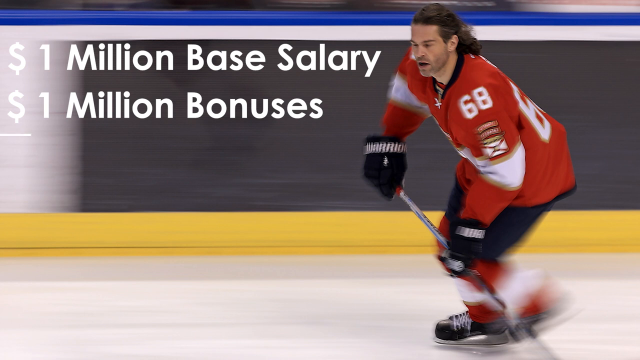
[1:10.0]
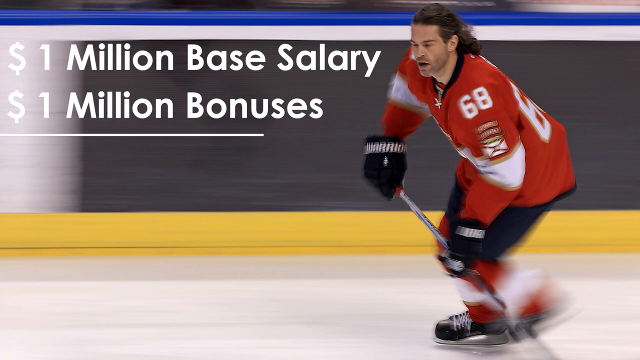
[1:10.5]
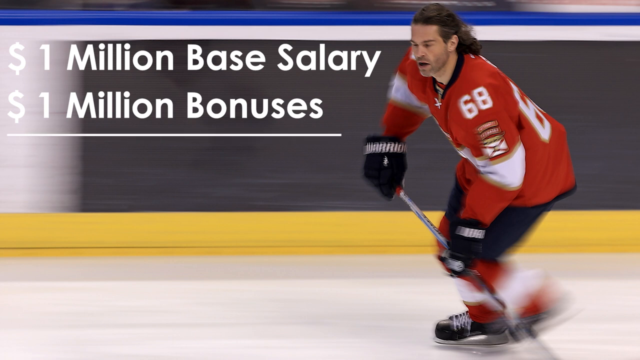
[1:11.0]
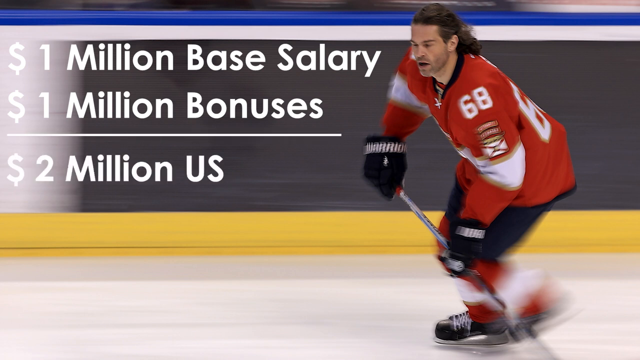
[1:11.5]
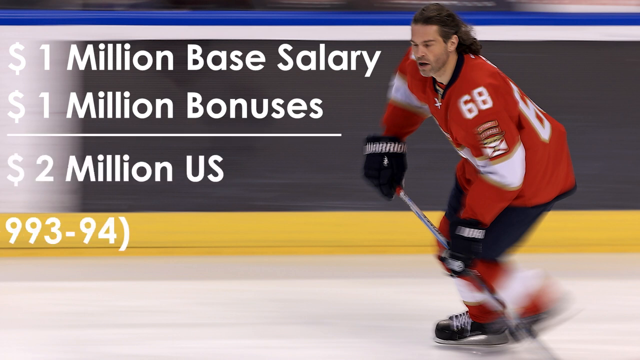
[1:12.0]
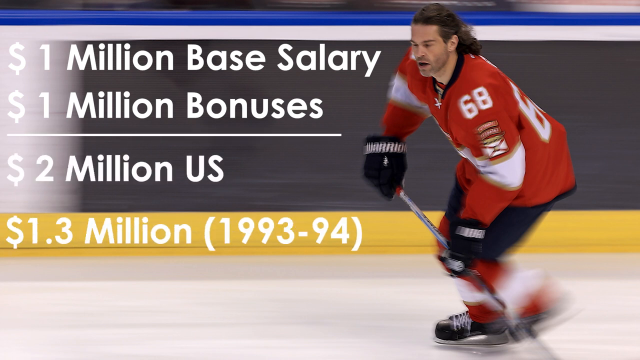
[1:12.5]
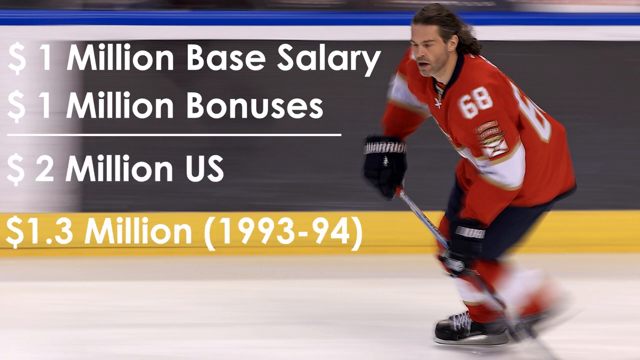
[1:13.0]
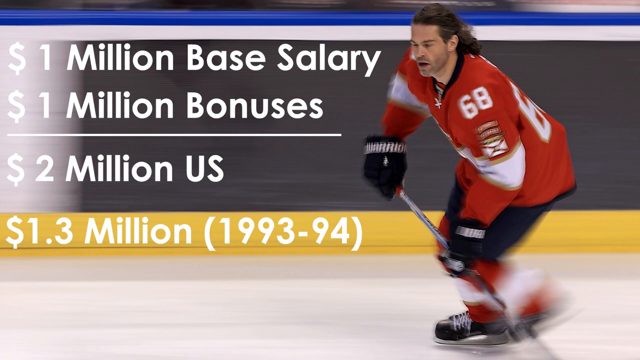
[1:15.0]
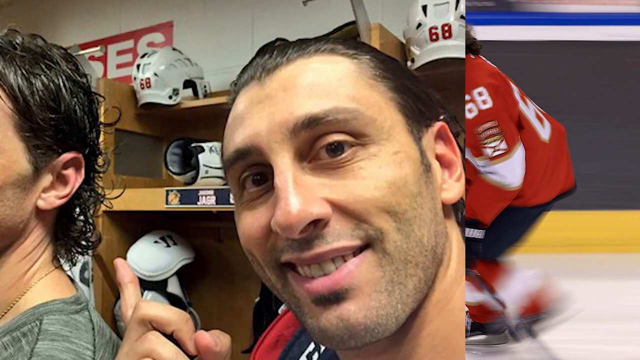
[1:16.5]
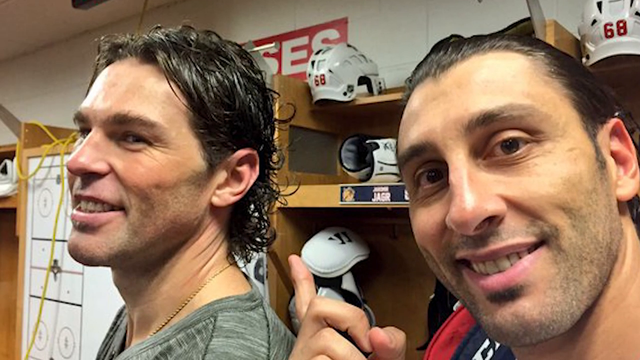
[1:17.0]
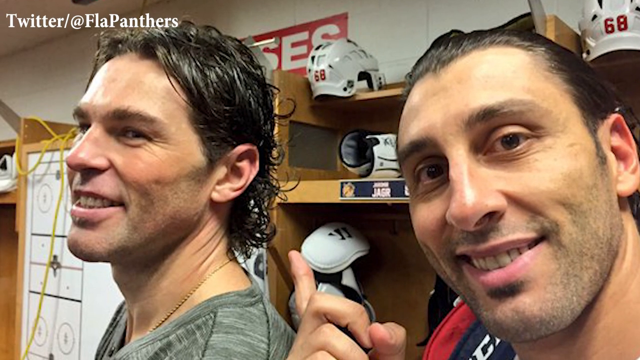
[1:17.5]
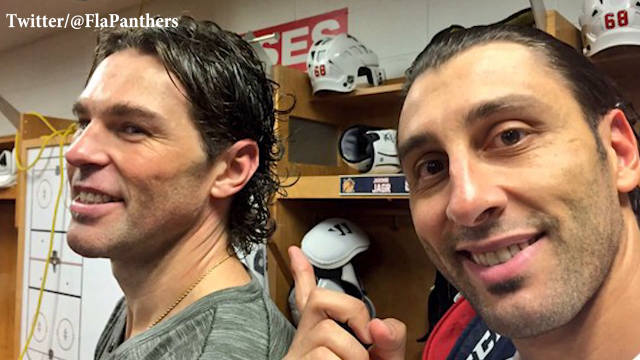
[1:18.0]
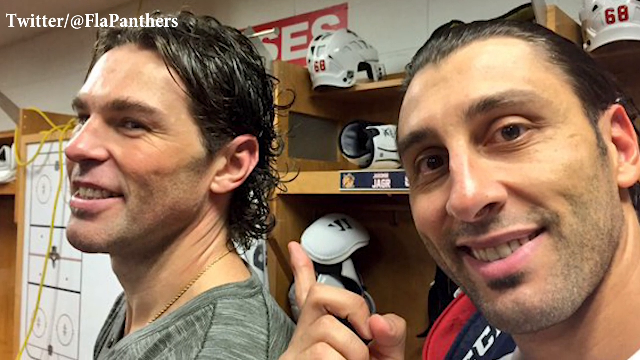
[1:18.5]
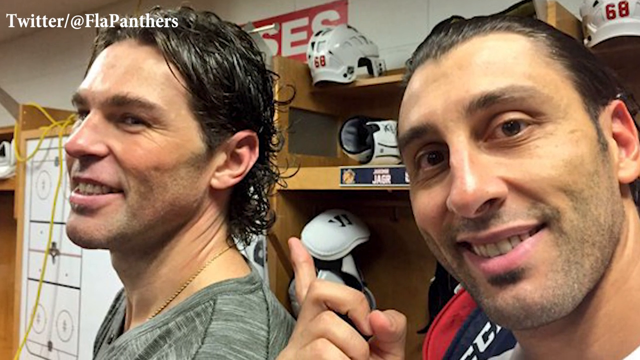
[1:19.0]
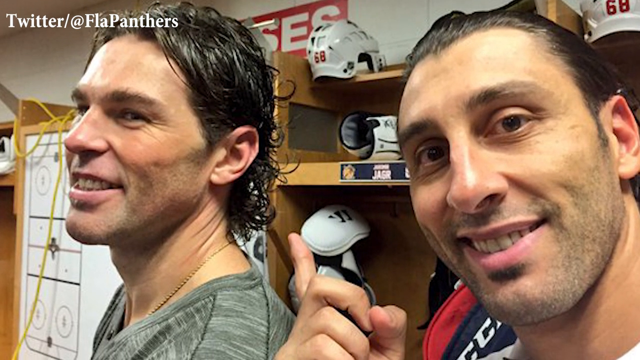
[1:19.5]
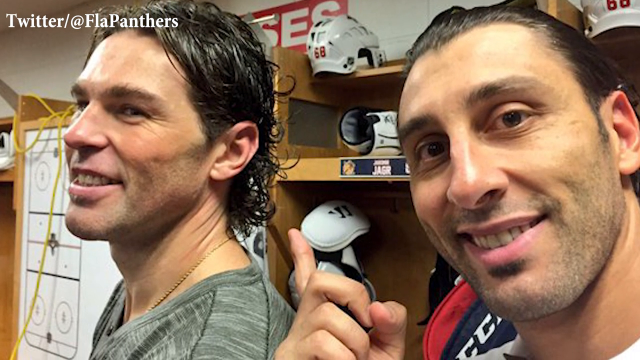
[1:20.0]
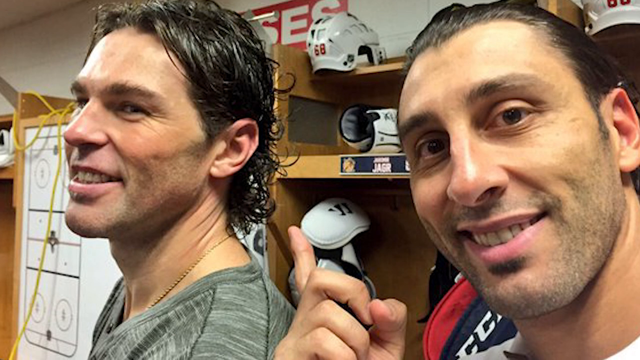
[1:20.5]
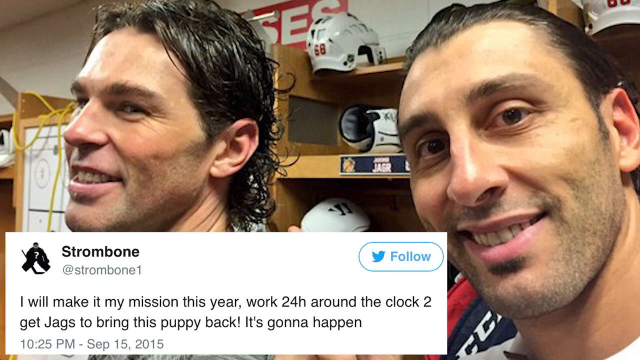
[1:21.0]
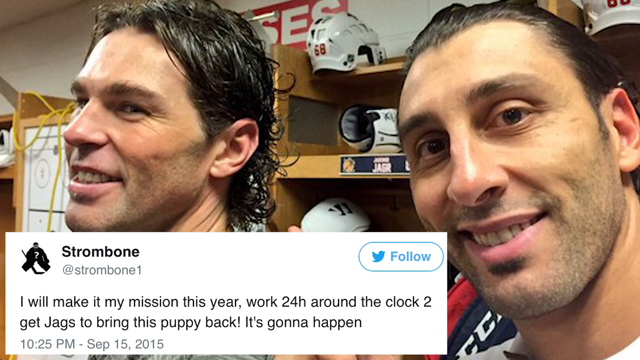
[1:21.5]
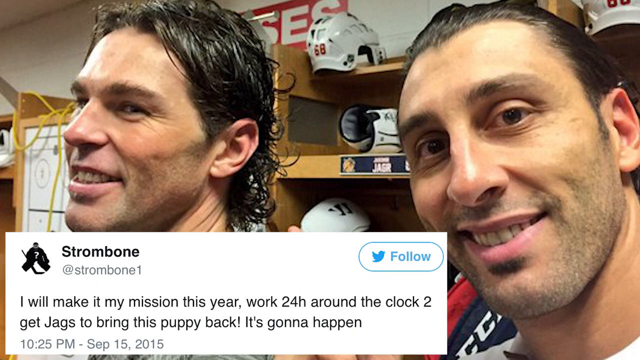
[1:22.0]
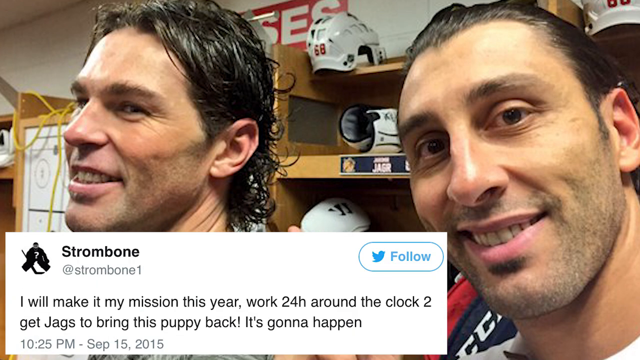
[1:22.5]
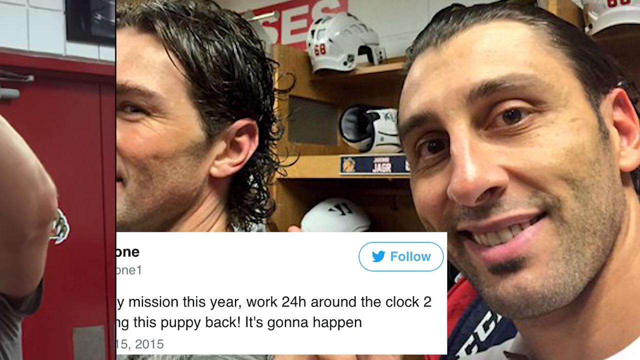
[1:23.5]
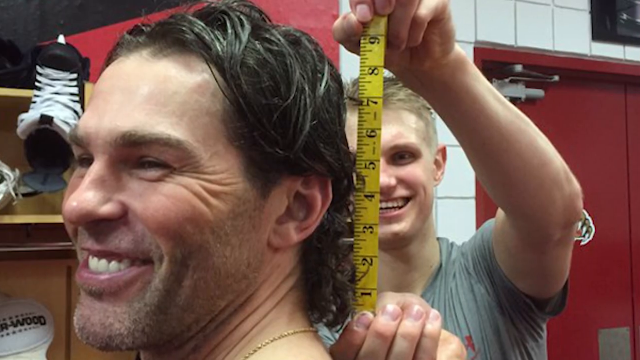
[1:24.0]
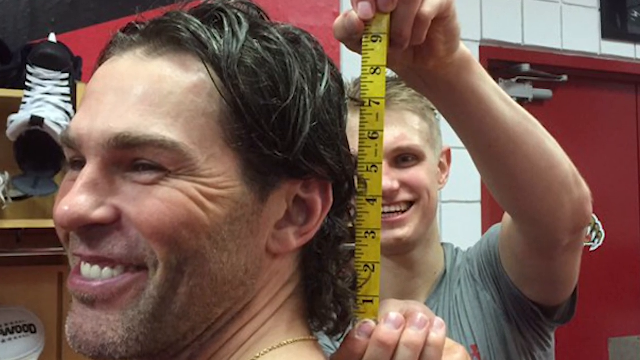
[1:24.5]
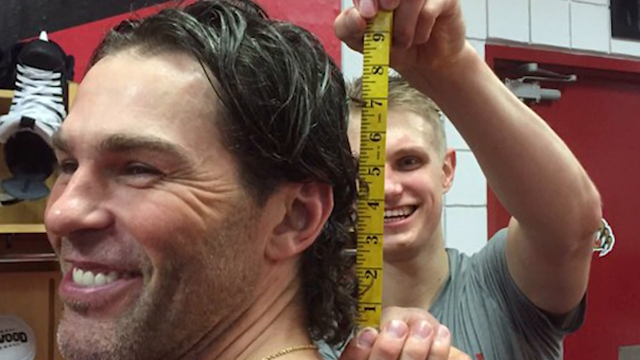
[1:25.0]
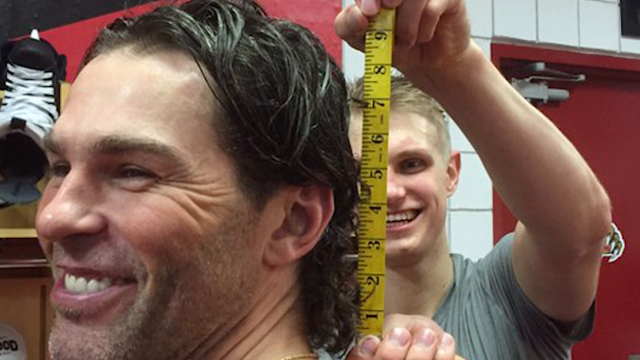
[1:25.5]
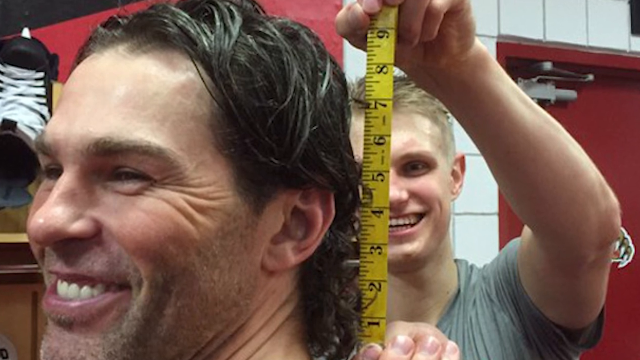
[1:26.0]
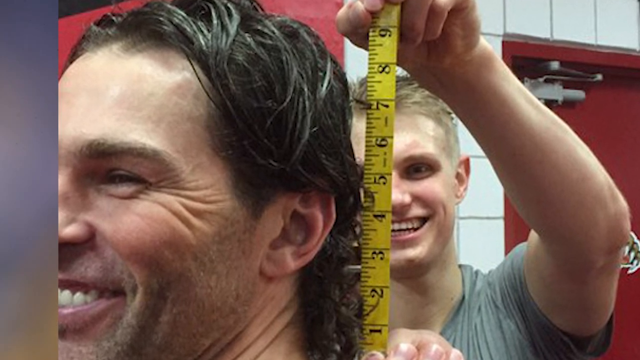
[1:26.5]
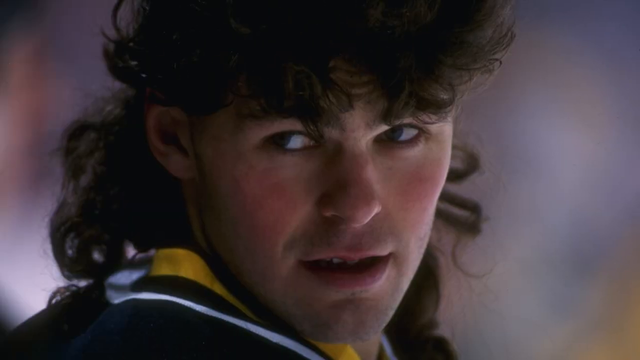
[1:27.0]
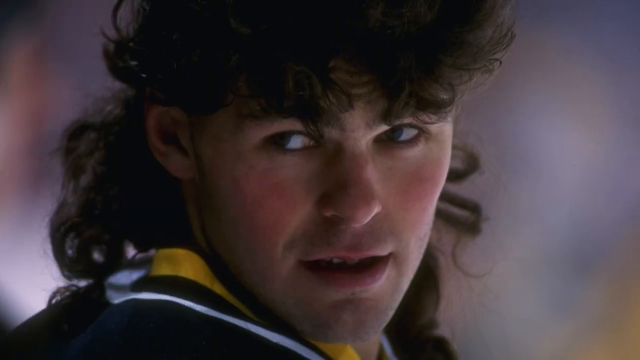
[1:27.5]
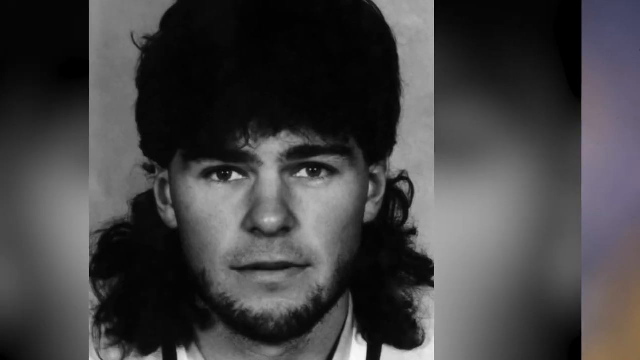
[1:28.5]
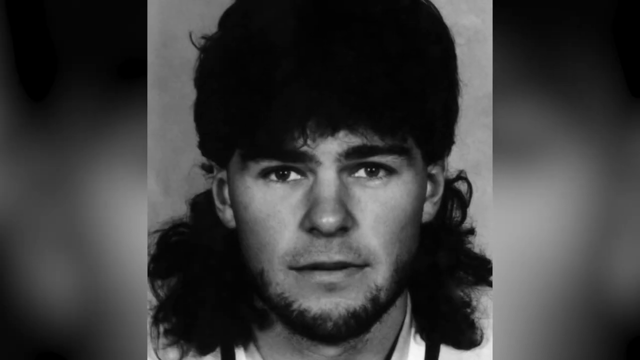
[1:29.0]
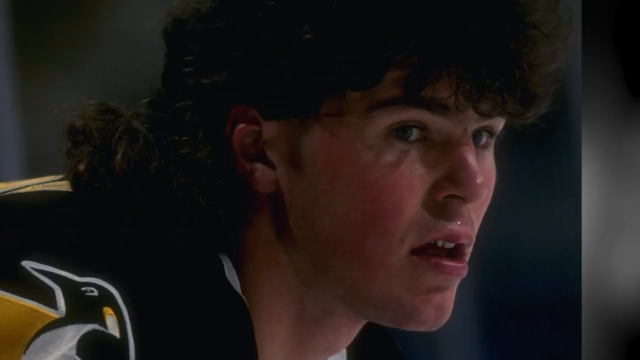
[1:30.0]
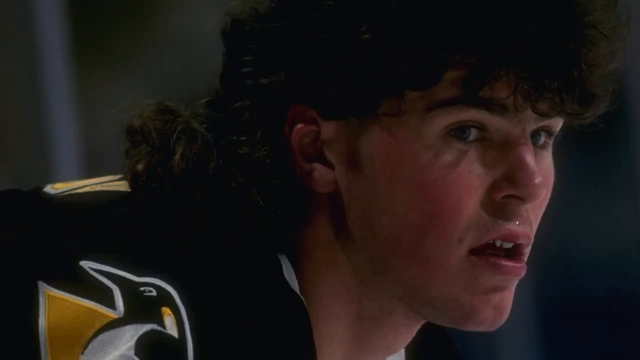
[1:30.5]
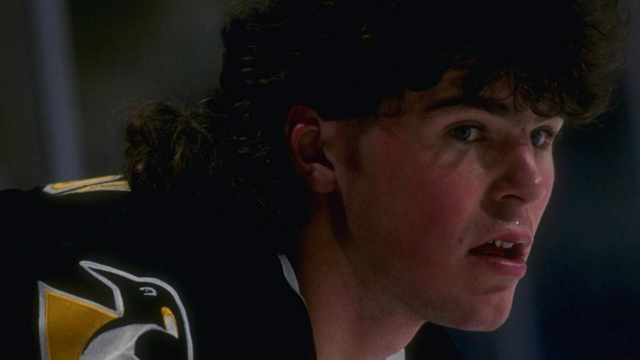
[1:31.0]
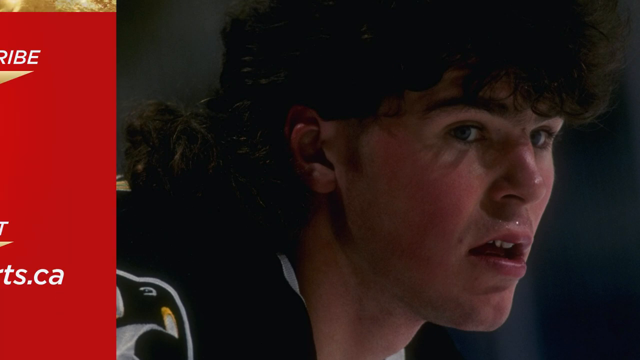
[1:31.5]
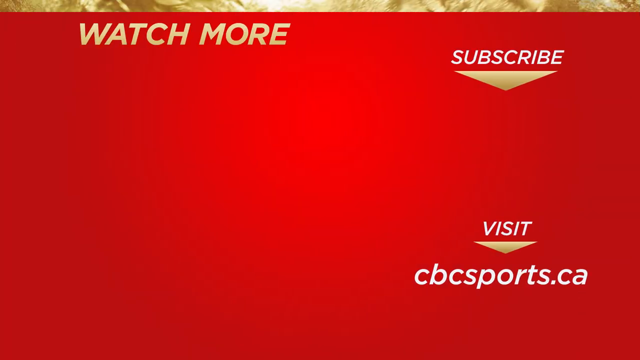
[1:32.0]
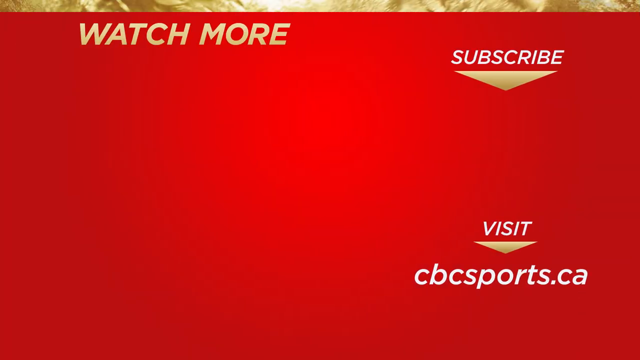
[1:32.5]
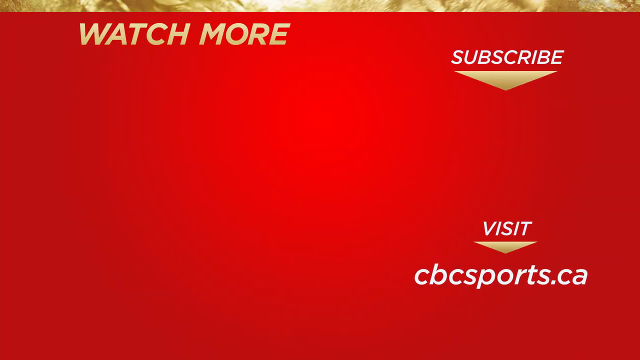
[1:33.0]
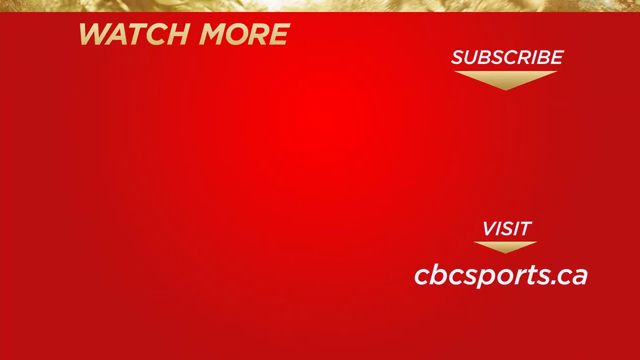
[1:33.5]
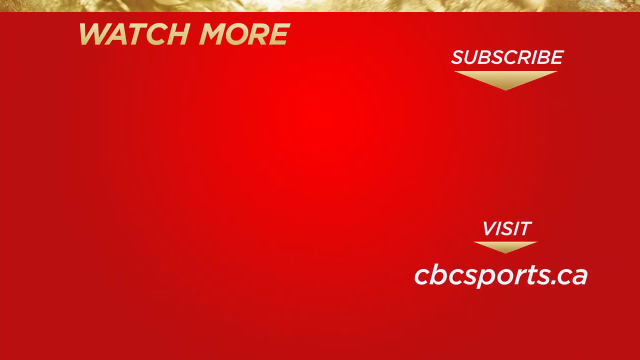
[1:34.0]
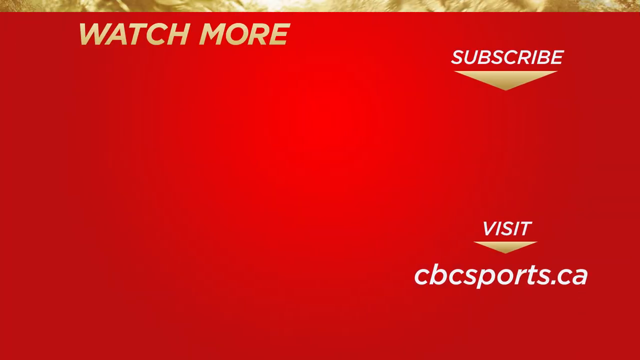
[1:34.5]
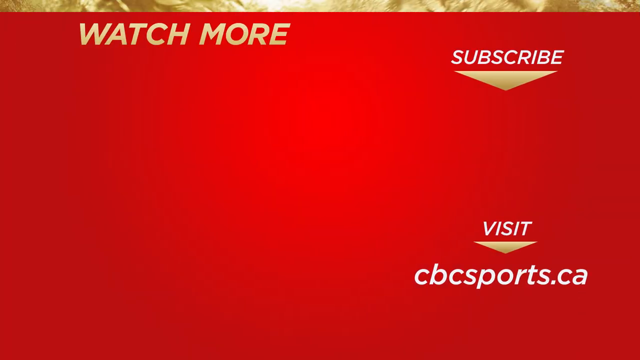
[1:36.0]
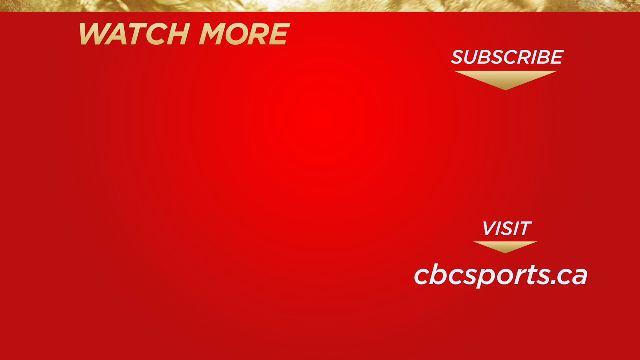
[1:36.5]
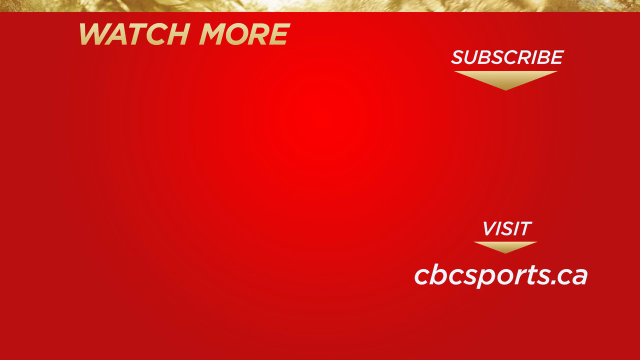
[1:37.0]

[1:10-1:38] Jeremy's base salary is shown as 1 million dollars, with bonuses of 1 million dollars; then 2 million USD is underlined, with 1.3 million added. Jeremy is shown in a locker room. A tweet appears showing that Jeremy has been growing his mullet, and pictures show him from when he was young to fully grown with a beard. He is then shown in the locker room shaving, an extreme change. Another tweet says "I will make my mission this year and work 24 around the clock to get Jax to bring this puppy back. It's gonna happen."